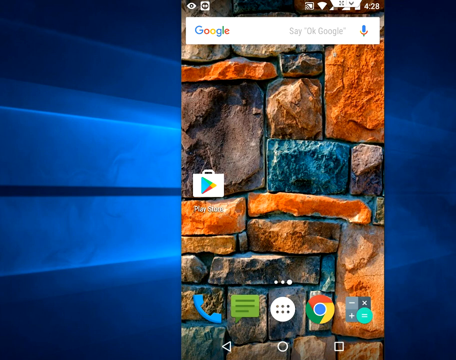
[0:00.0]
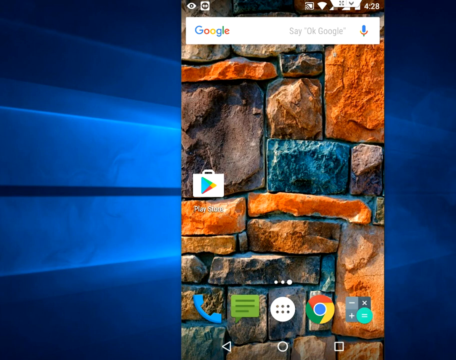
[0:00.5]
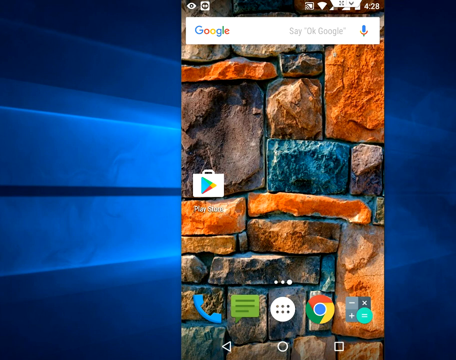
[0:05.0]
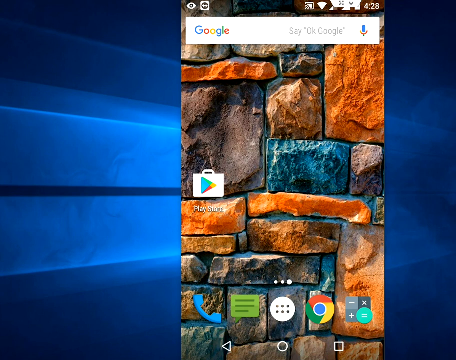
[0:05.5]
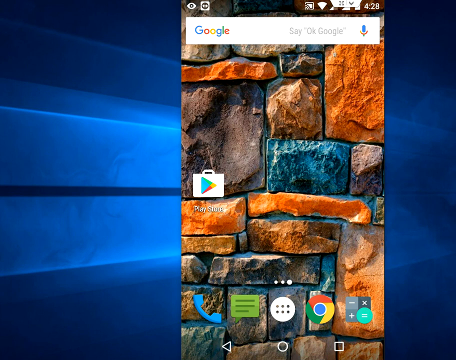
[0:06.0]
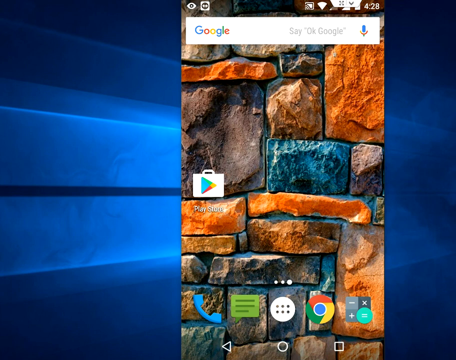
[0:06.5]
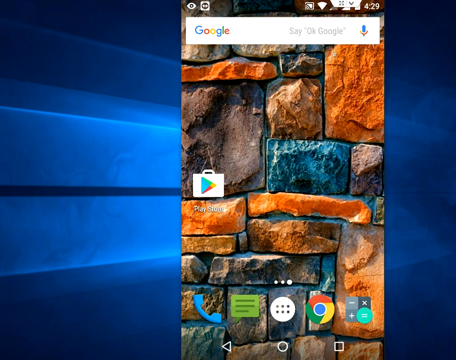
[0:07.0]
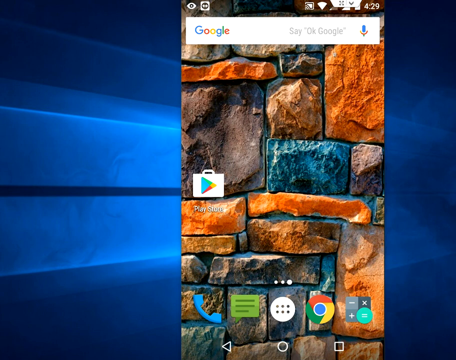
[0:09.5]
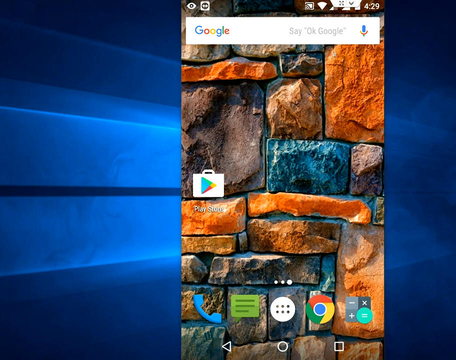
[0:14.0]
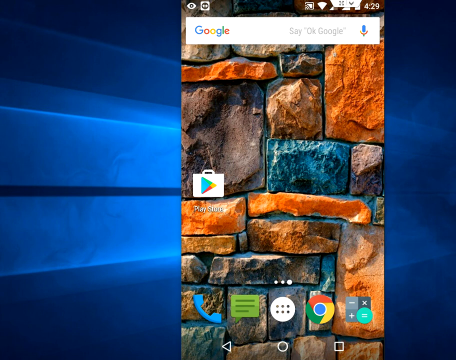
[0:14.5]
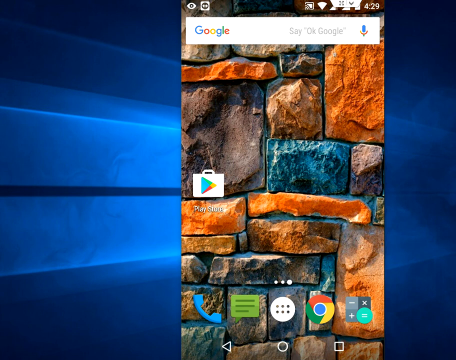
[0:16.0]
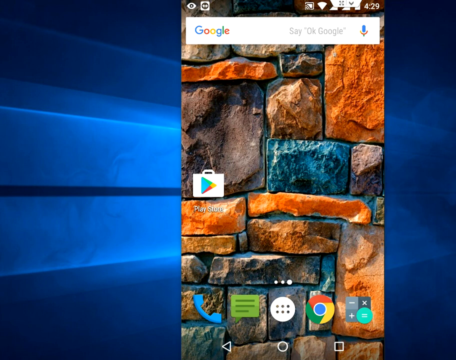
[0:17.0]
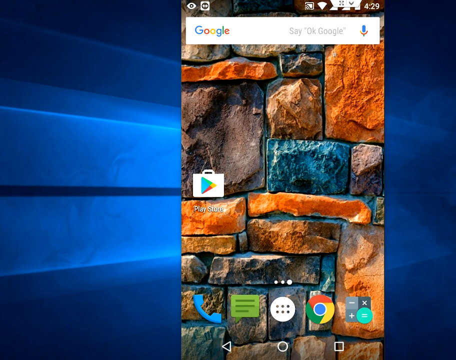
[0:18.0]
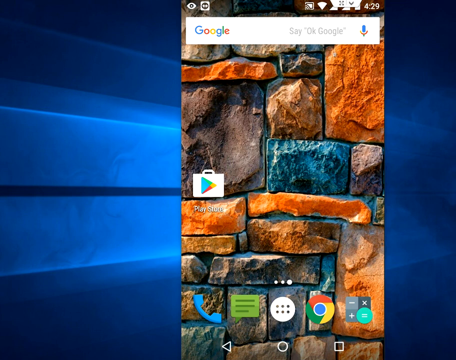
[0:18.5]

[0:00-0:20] A screenshot of someone's phone appears over a royal blue background. The wallpaper is a very colorful rock wall with orange rocks, gray rocks and, it seems, a little bit of blue. At the top, underneath the time of 4:28, there is a Google search bar. In the middle of the screen the only icon is the Google Play Store icon, with "Play Store" written underneath it. Five icons run across the bottom: a blue telephone icon, a green contact icon, what looks like a white button with six little holes, the Google Chrome icon and a calculator icon. Above those icons are three little dots, and the dot all the way to the right is a little bit bigger, which seems to indicate the page being viewed.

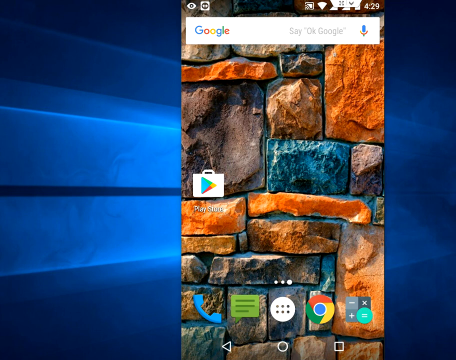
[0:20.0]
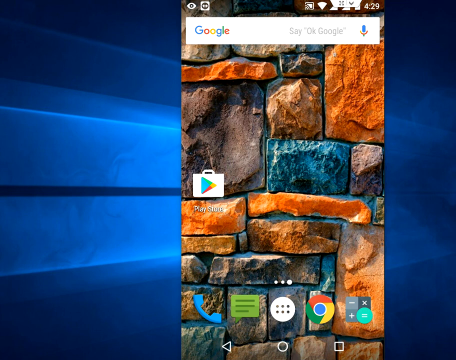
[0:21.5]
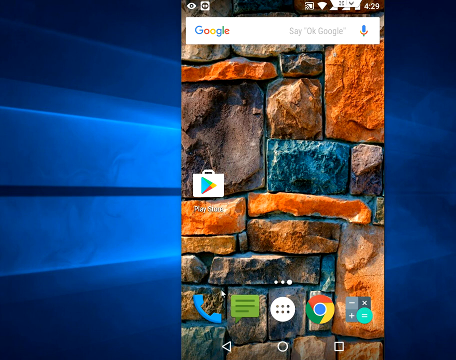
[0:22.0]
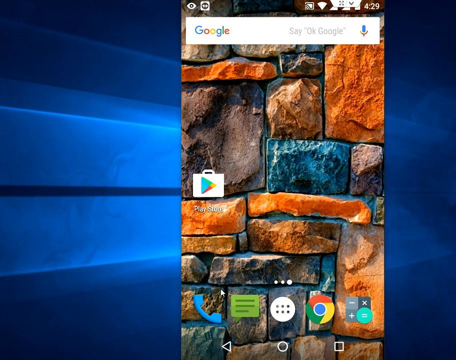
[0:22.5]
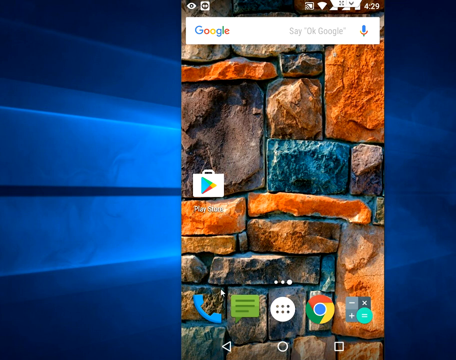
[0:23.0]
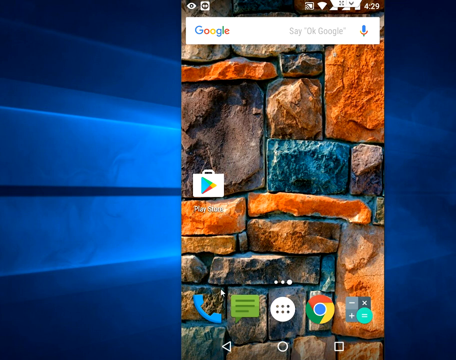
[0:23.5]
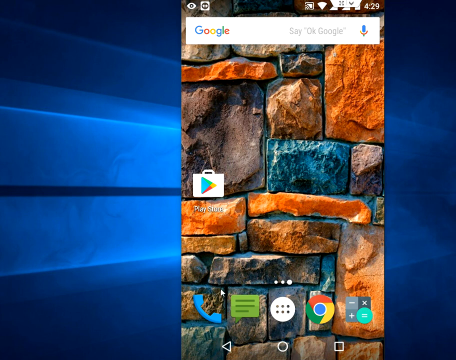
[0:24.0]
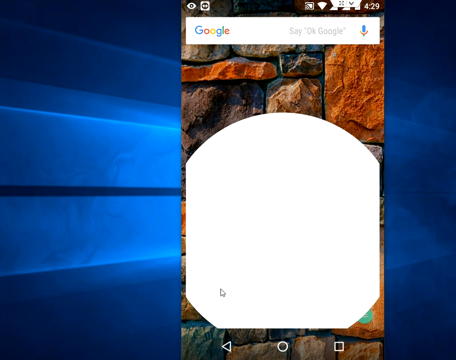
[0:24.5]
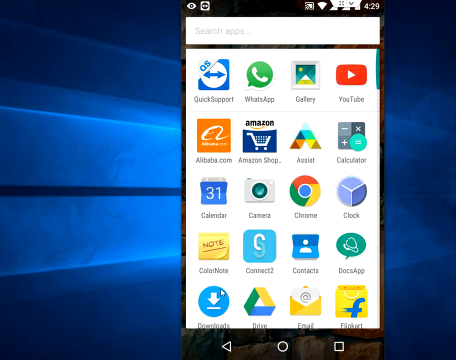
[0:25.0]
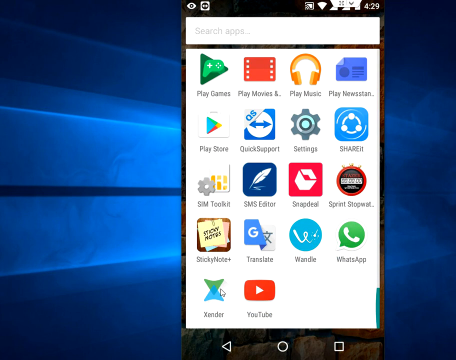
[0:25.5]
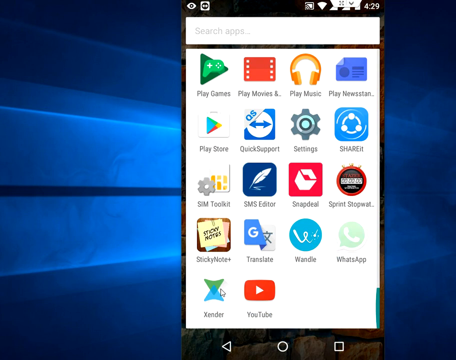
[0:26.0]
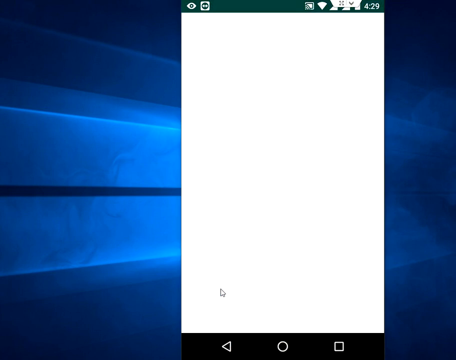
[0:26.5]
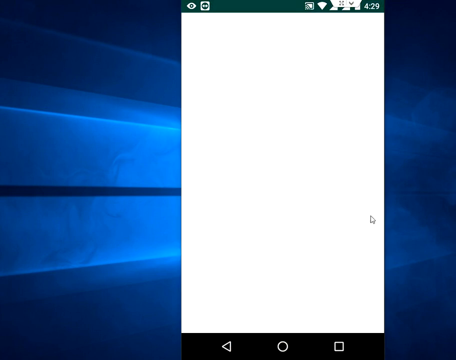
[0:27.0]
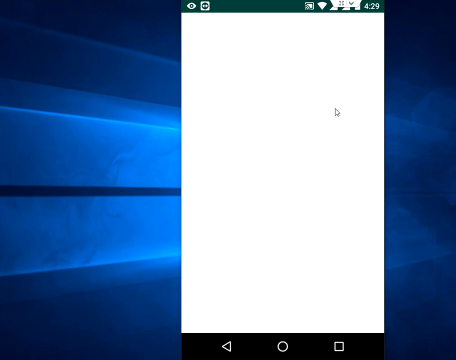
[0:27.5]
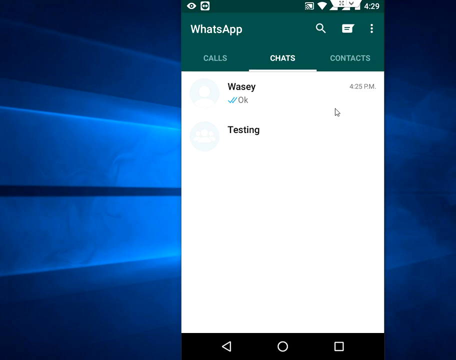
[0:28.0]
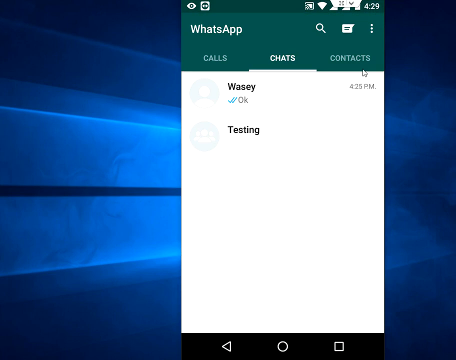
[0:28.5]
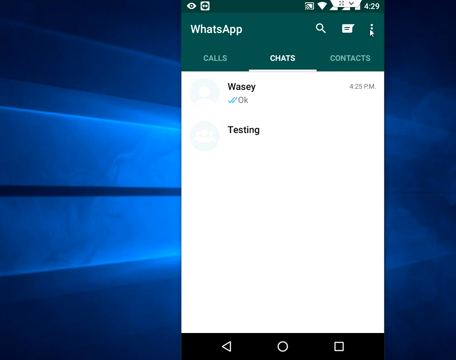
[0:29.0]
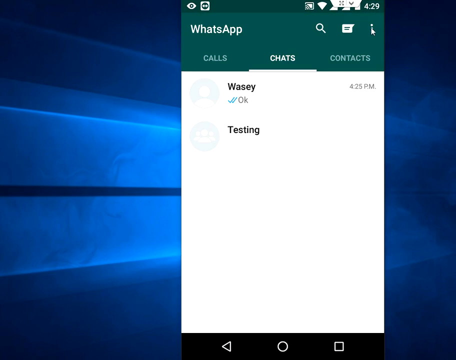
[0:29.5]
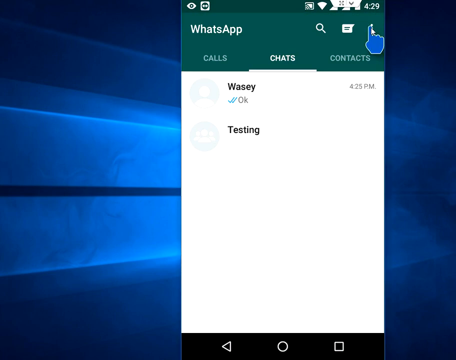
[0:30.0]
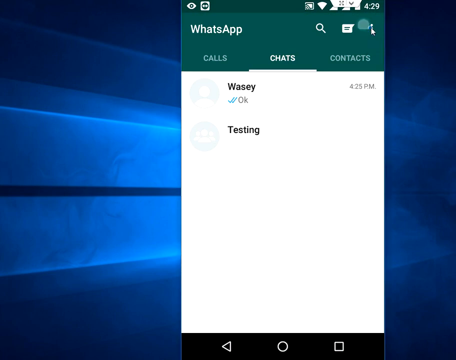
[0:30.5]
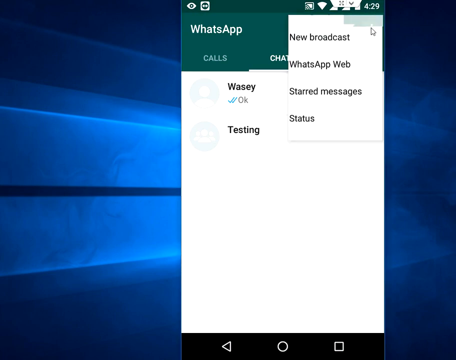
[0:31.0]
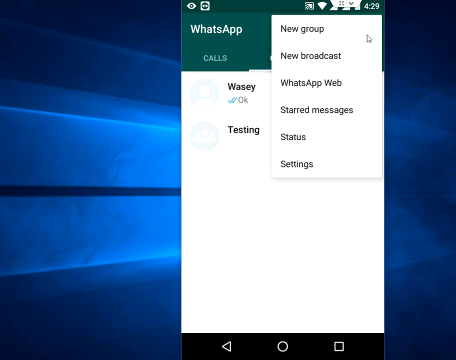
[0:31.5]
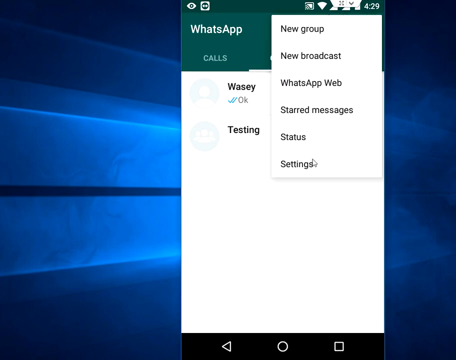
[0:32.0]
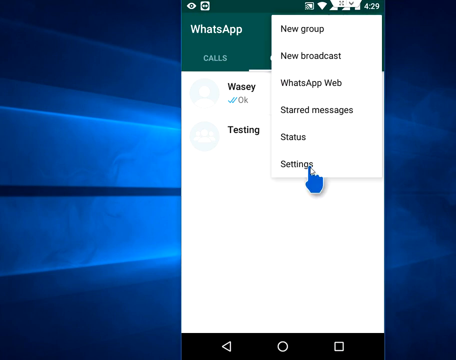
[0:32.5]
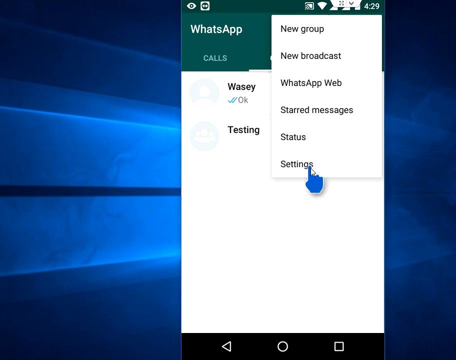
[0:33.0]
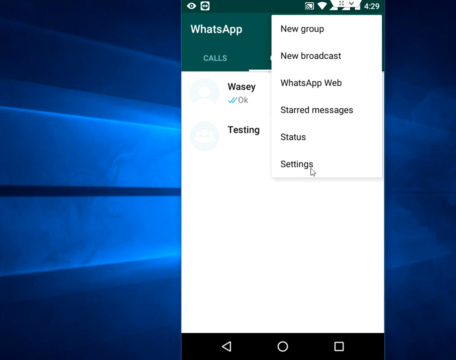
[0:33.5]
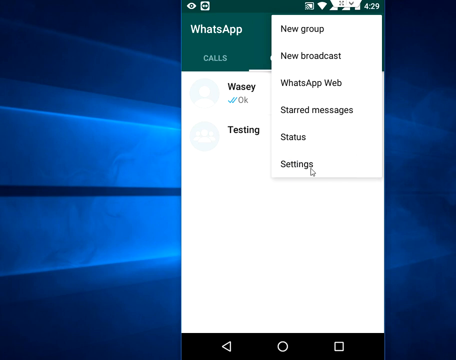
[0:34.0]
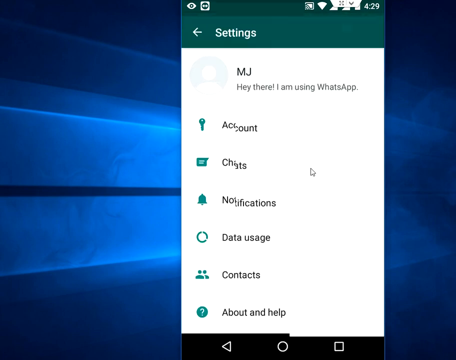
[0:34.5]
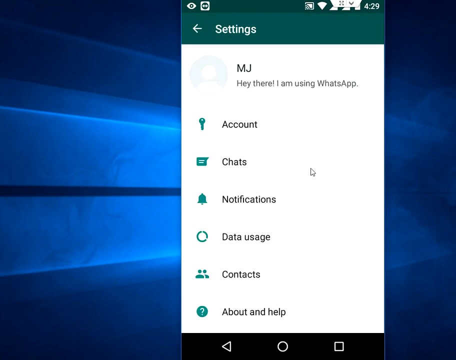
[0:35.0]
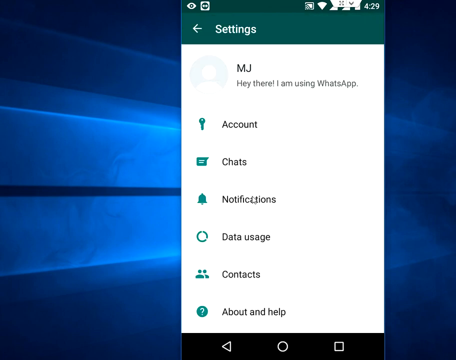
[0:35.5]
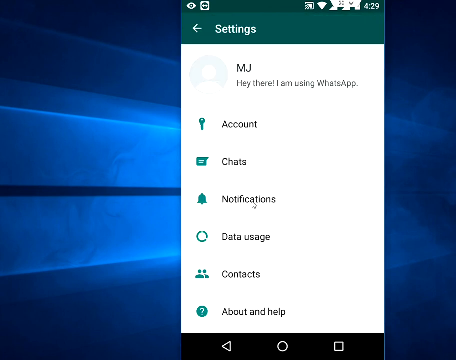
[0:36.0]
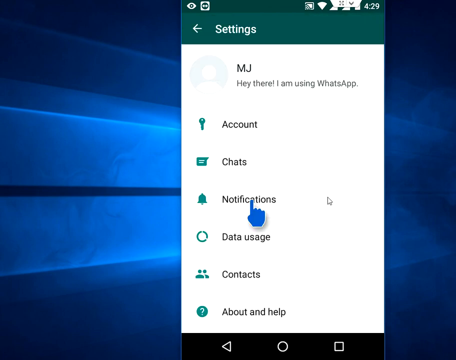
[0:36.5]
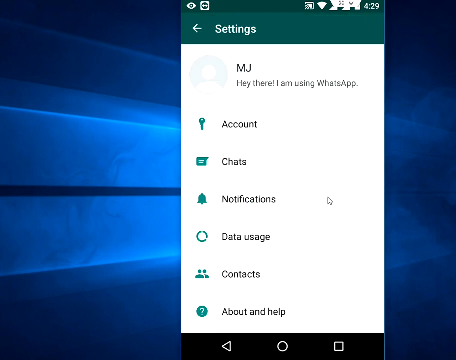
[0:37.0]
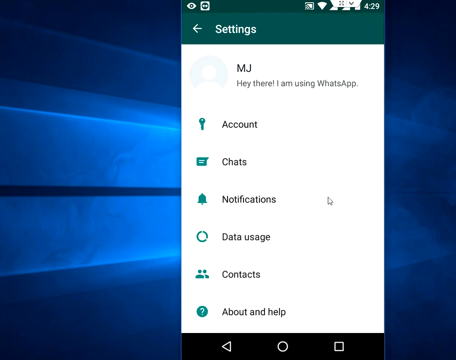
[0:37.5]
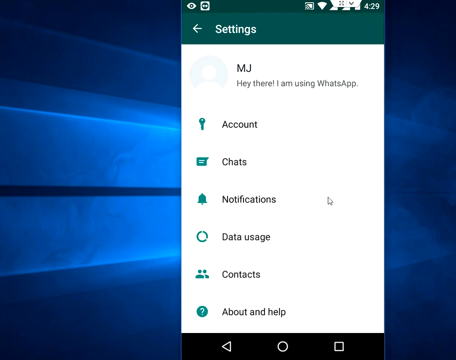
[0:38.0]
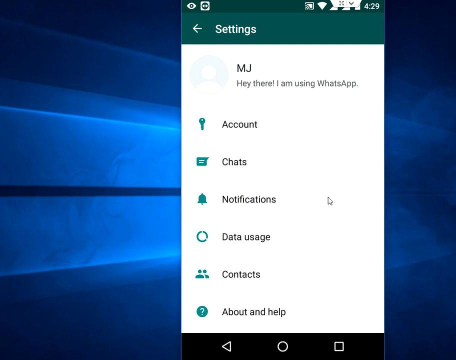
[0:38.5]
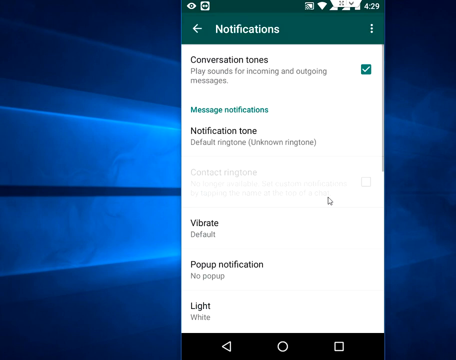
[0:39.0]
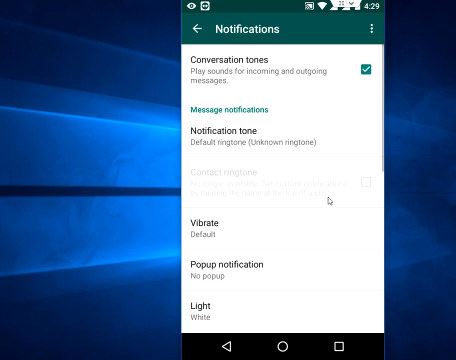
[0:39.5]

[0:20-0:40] A phone screenshot is shown on what looks like a PowerPoint presentation. The phone's picture is a colorful stone wall whose rocks look like they were cut into square-ish shapes, some orange, some blue and some gray. The time on the phone is 4:29. At the top is the Google search bar, with "Google" on the left, a very faint "say, okay, Google", and a microphone on the right. The only icon in the middle of the phone is the Google Play Store icon, on the left in the middle. Five icons run across the bottom: a blue phone, a green contact icon, a white circle with three dots that looks a little like a button, a Google Chrome icon and a calculator icon. Suddenly the screen changes as if someone tapped into something, and a bunch of the phone's apps appear in five lines, each with an icon. This goes by very quickly, and then it appears the WhatsApp app is tapped; it is set on chats, and settings is chosen. A mouse does this, and then notifications is chosen. The view then switches back to the screenshot of the phone's home screen.